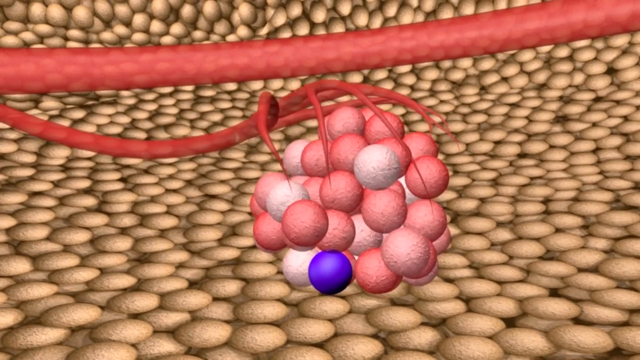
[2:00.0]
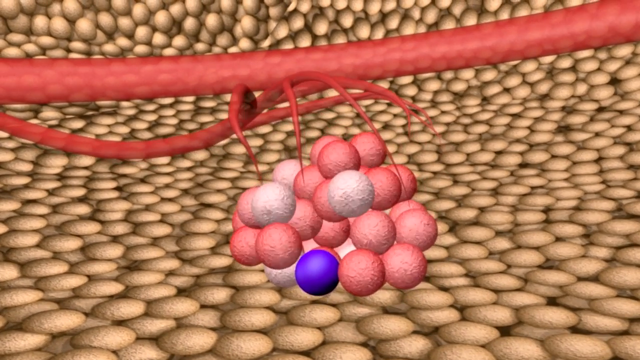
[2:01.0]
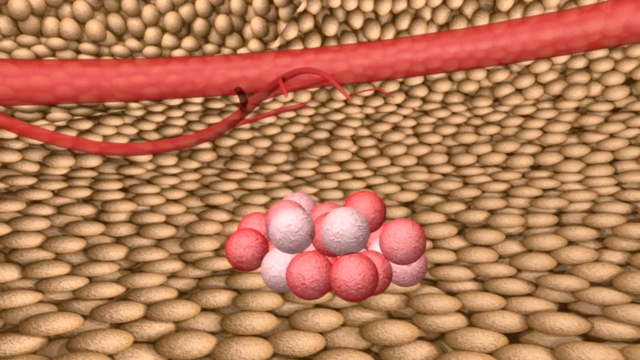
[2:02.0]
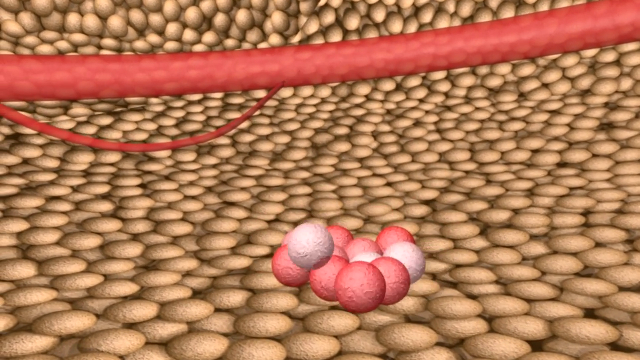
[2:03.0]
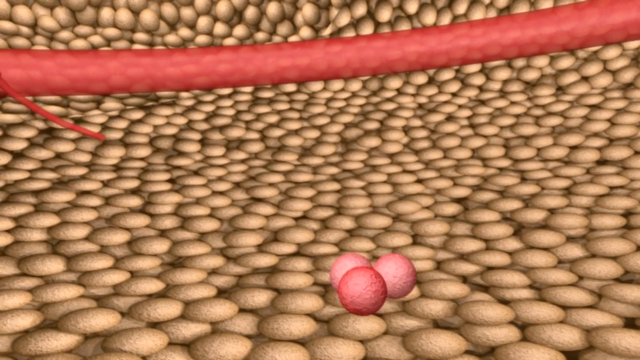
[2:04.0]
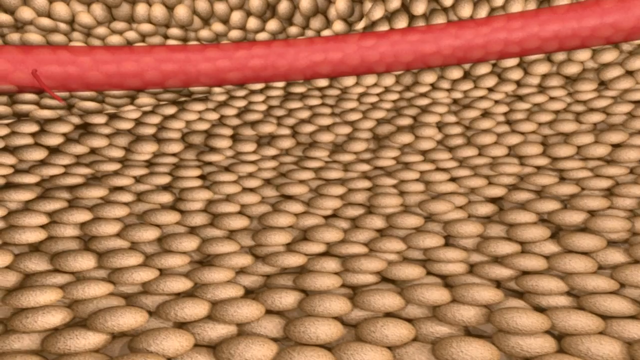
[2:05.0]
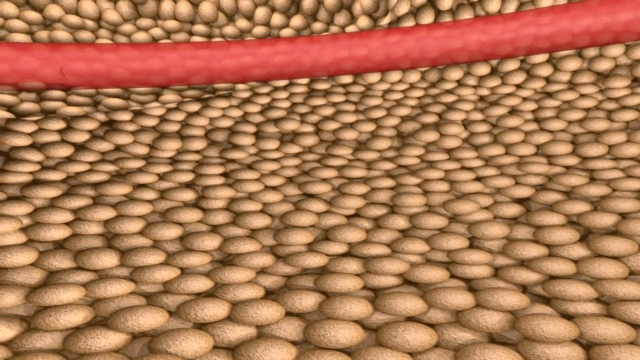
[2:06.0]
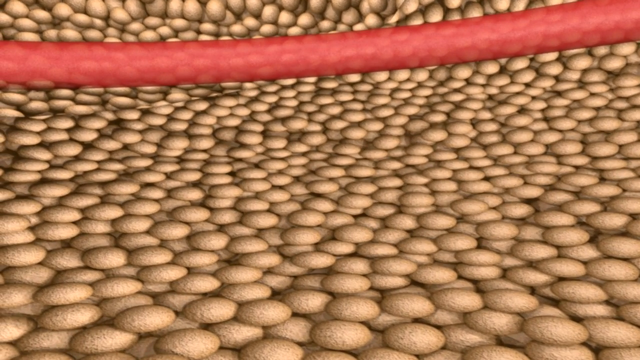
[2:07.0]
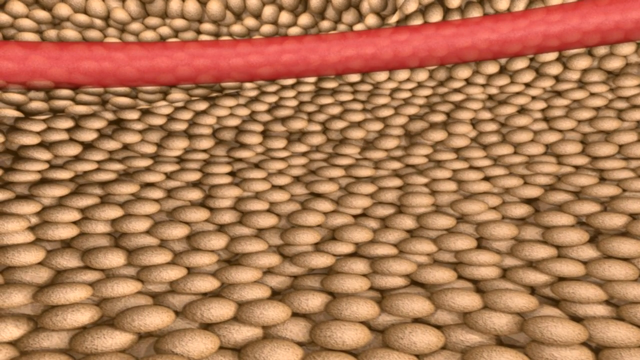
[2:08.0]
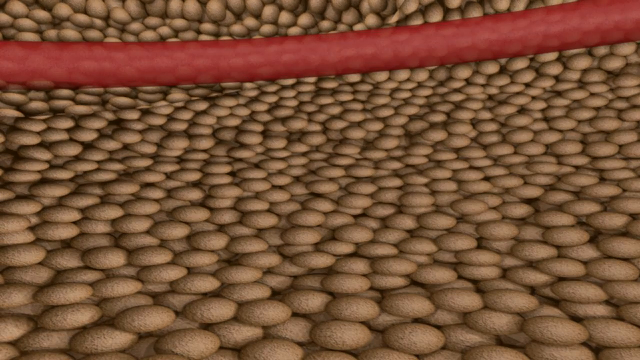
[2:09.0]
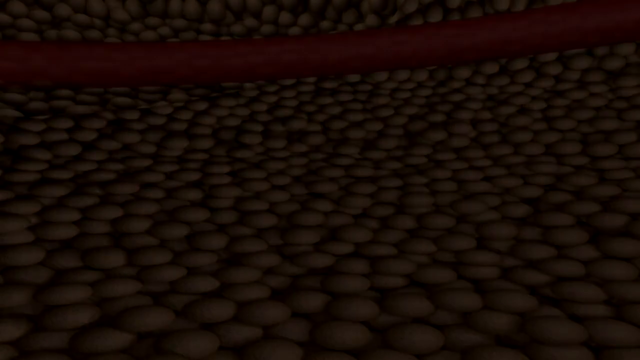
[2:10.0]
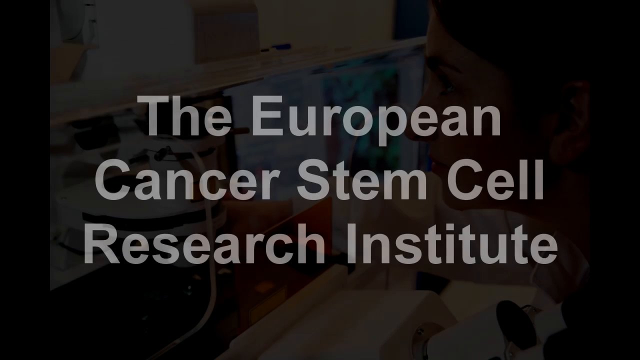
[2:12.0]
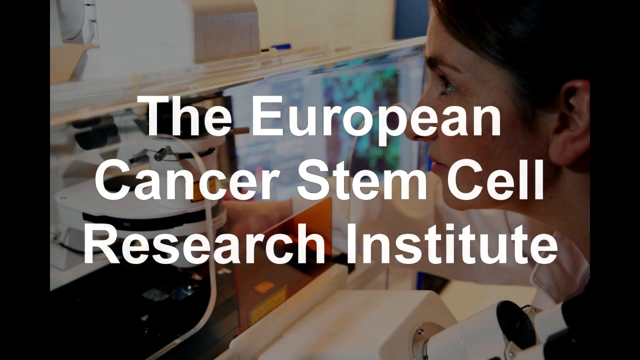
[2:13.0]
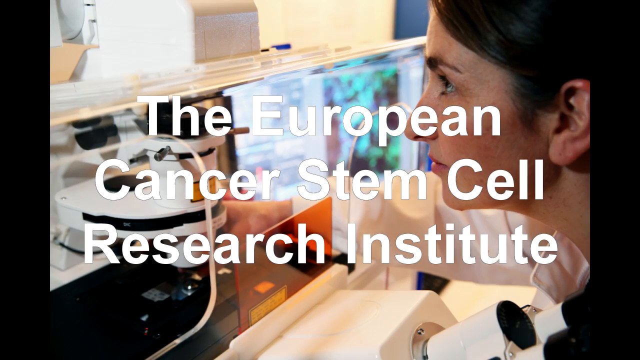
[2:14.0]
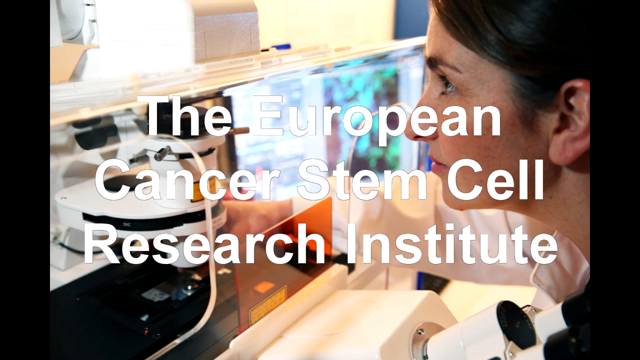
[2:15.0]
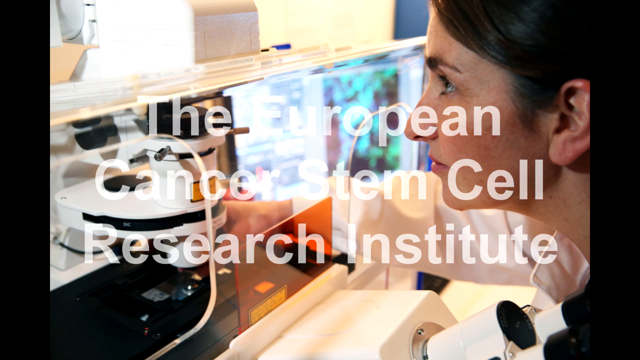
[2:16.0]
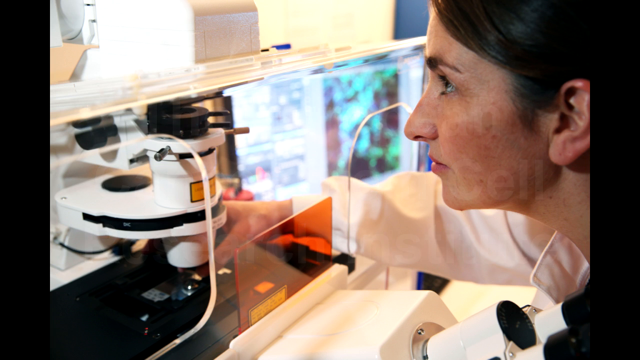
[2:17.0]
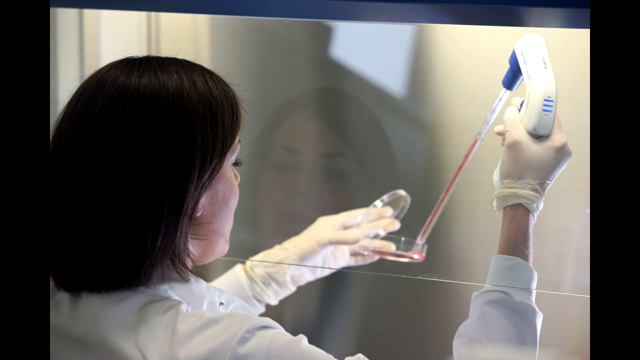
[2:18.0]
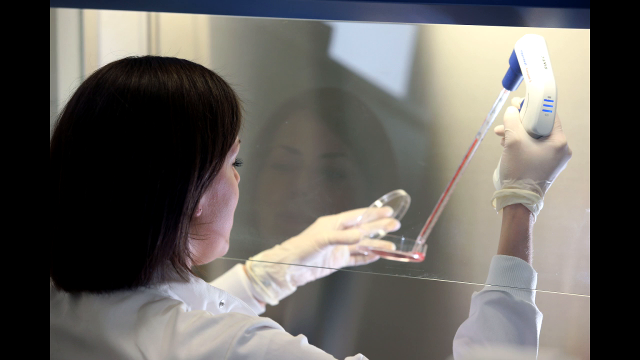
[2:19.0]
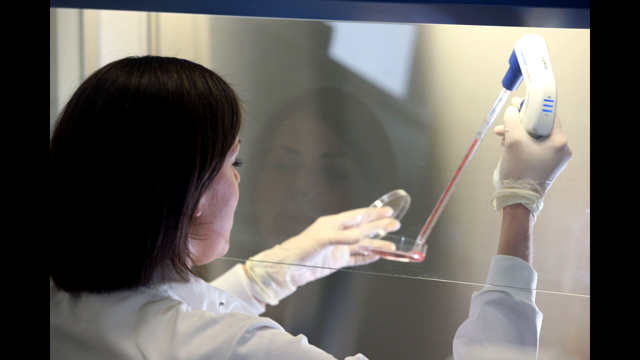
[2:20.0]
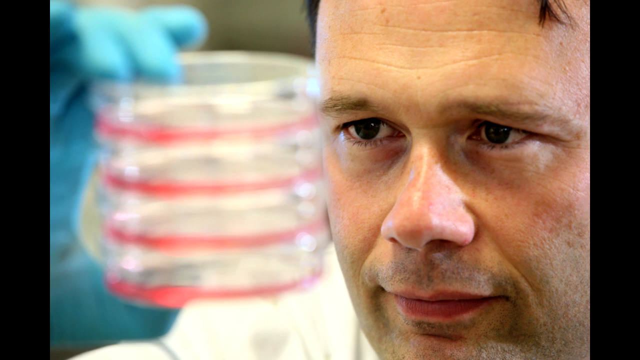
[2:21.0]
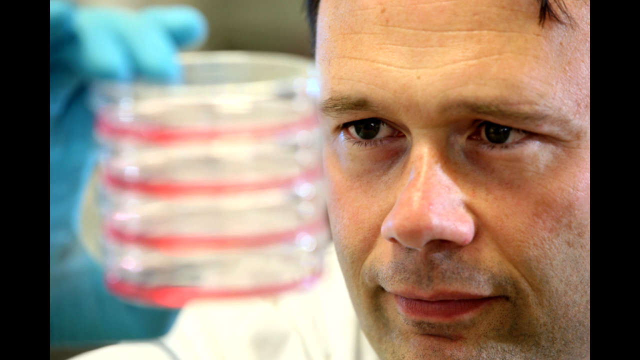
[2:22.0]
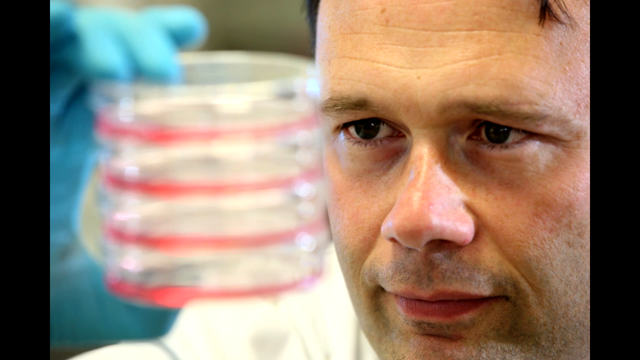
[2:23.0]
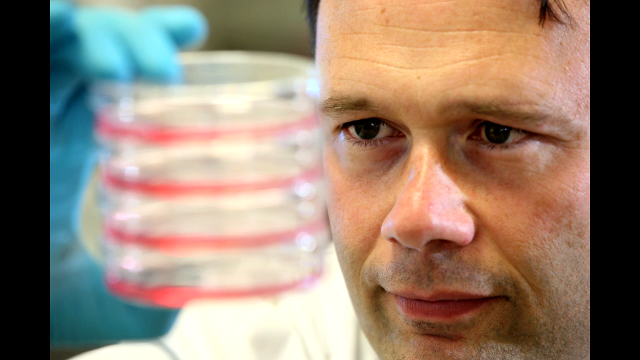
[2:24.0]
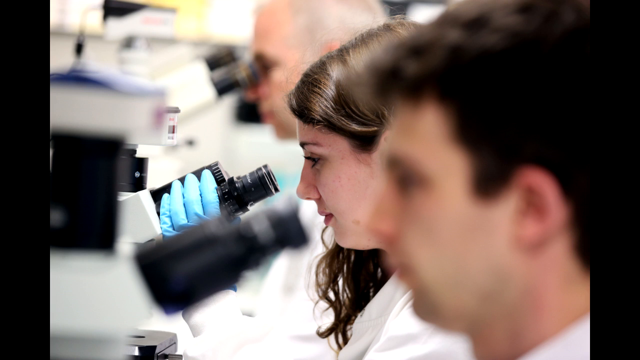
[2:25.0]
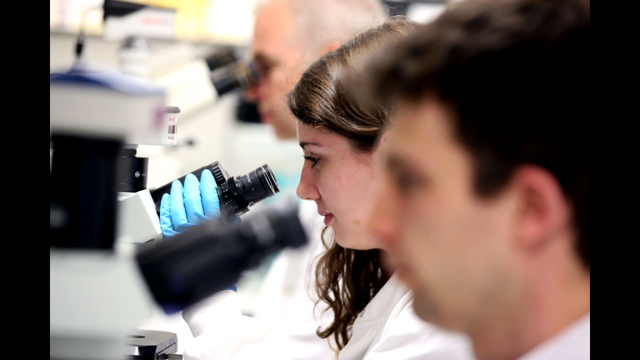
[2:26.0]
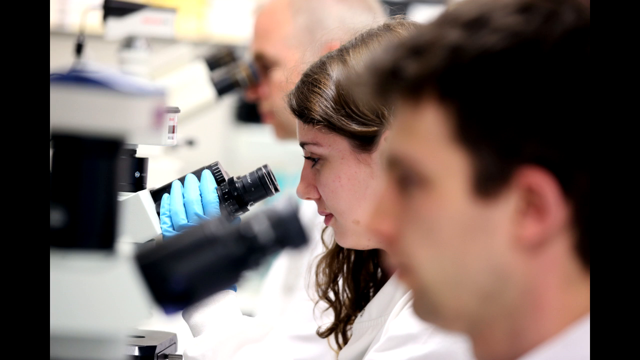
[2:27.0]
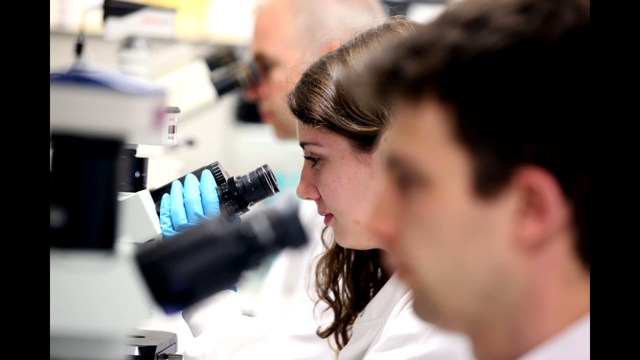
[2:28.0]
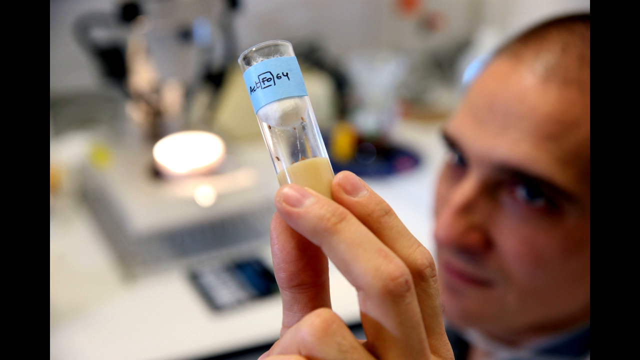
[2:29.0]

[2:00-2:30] The red and white balls deplete, going down to the bottom of the initial mass. As this happens, the small blood vessel on top begins receding back to the larger one. The small stem-like veins that were encasing the tumor retract first, followed by the rest of the vein, which is seen entering the larger blood vessel and disappearing. The next screen shows a woman looking at different computer screens; she seems to be in a lab-type environment and is paying close attention to the machine in front of her. White text on top of the image reads "the European Cancer Stem Cell Research Institute." The text fades away, and another image shows a woman using a tool to pump a red liquid into a petri dish; she is standing in front of a window, and her reflection is in front of her. Another scientist is shown holding a set of four different agar plates.